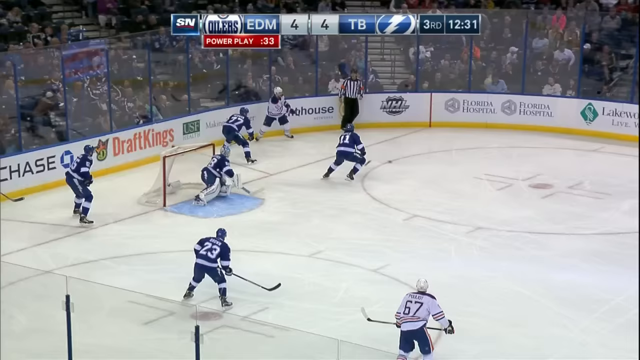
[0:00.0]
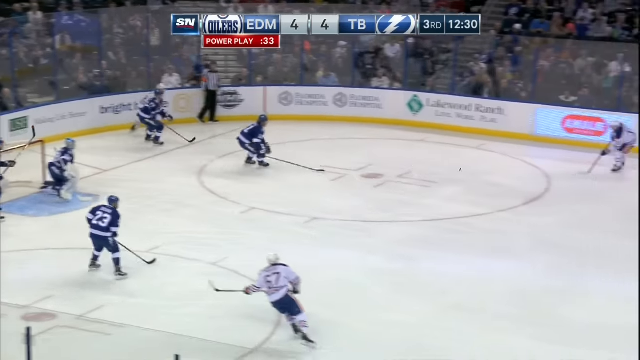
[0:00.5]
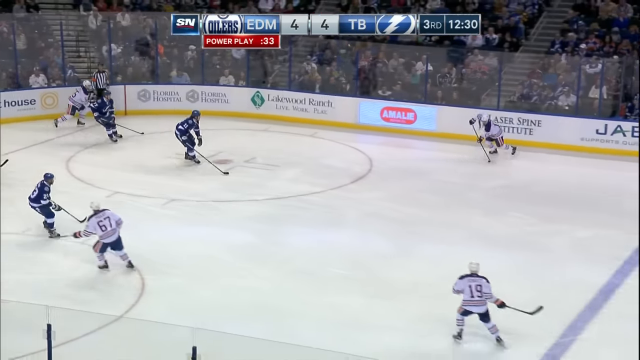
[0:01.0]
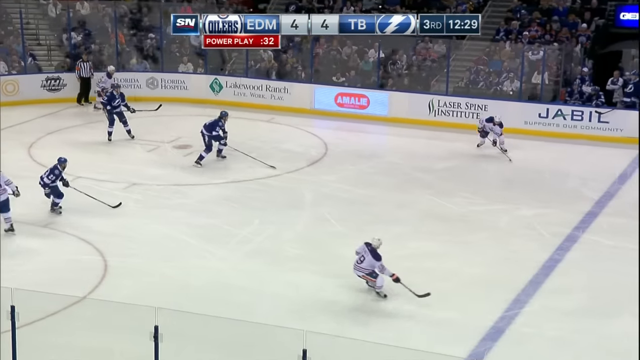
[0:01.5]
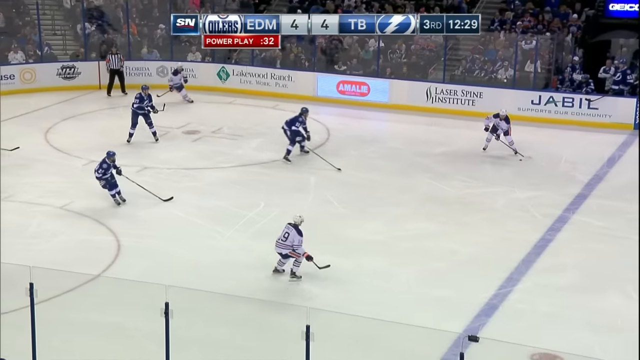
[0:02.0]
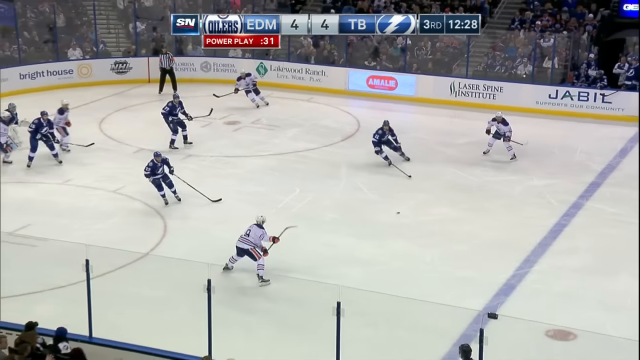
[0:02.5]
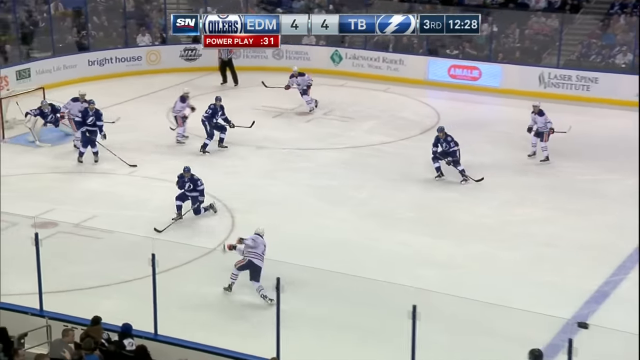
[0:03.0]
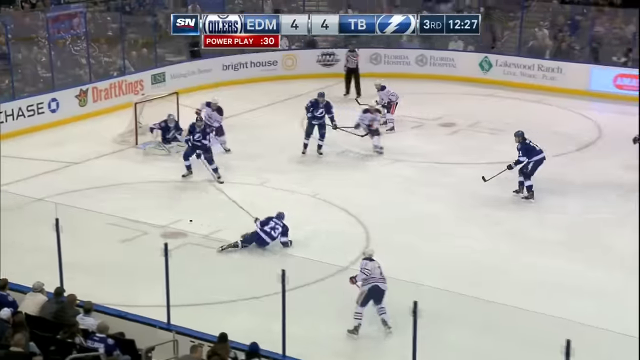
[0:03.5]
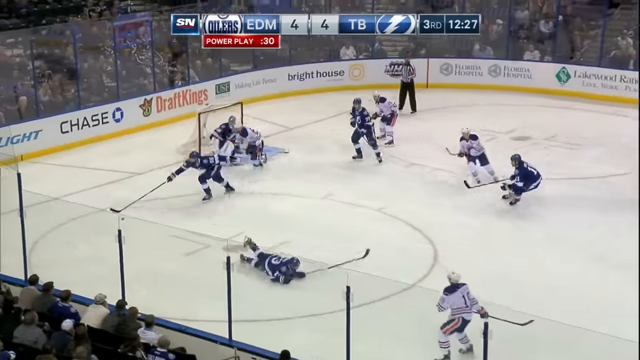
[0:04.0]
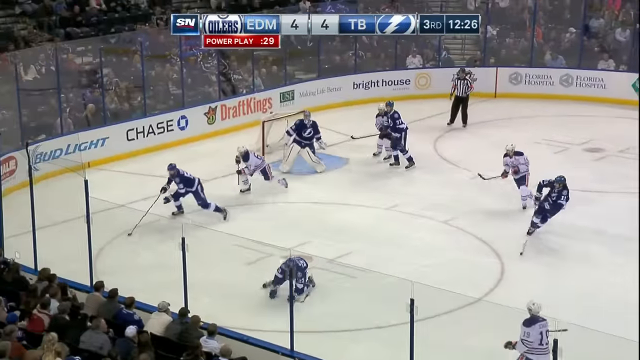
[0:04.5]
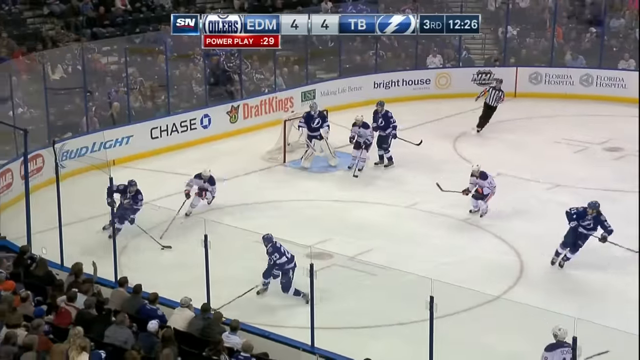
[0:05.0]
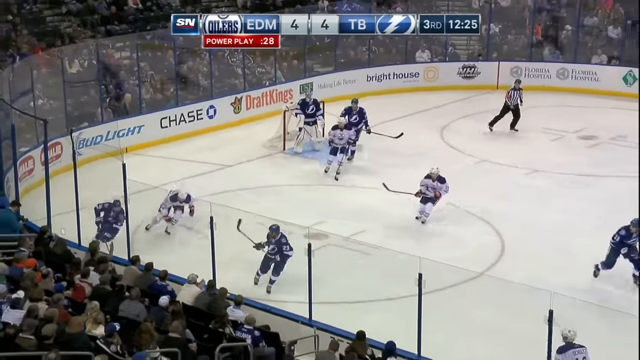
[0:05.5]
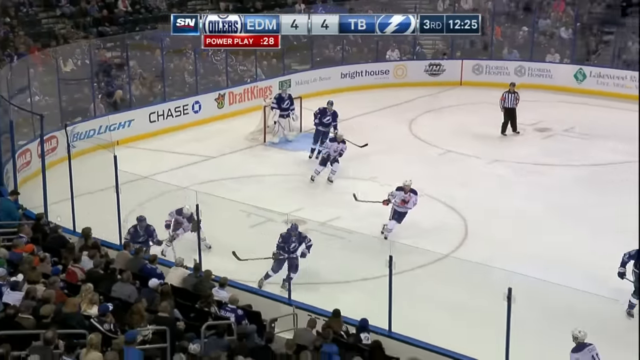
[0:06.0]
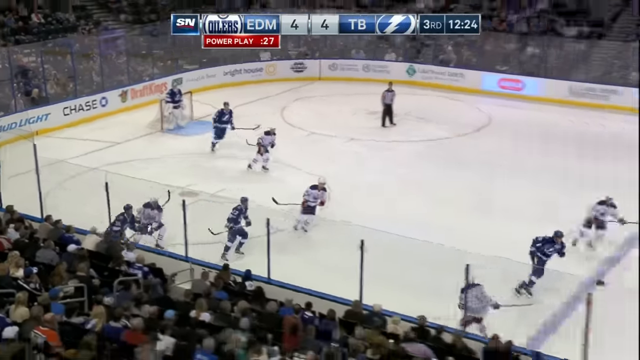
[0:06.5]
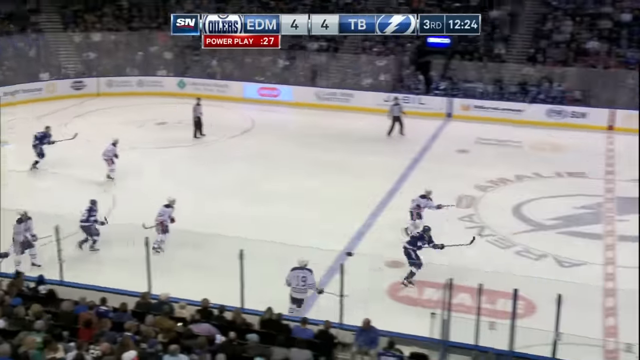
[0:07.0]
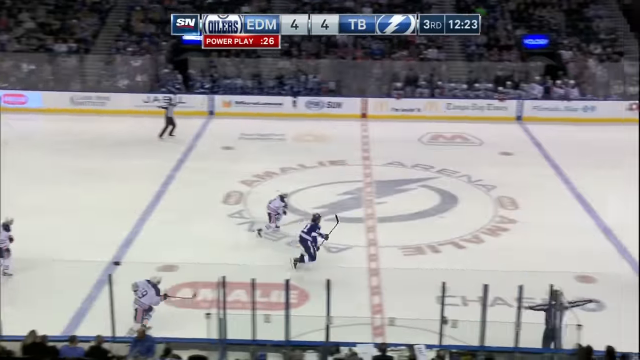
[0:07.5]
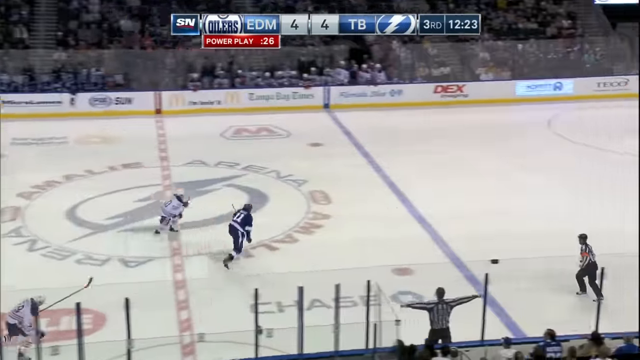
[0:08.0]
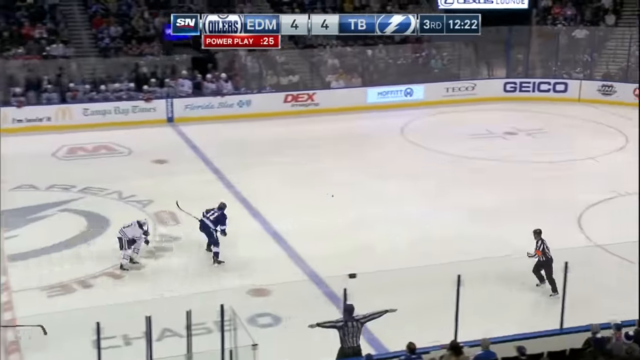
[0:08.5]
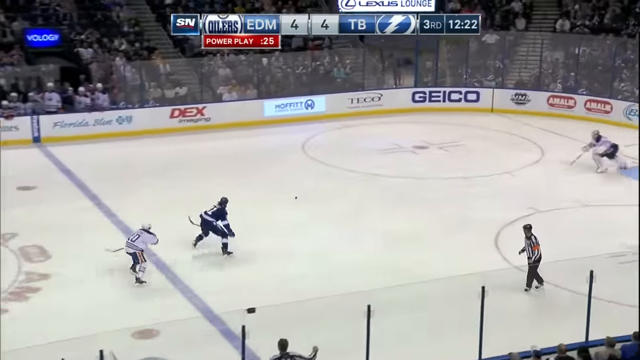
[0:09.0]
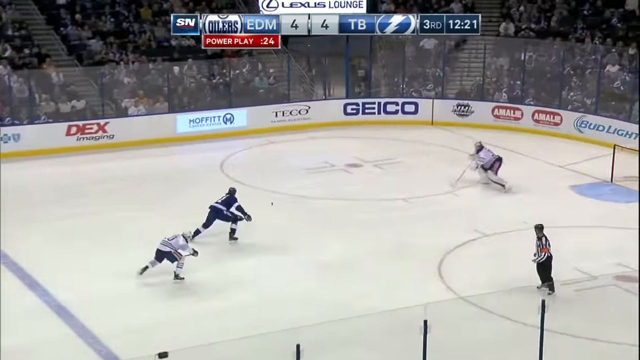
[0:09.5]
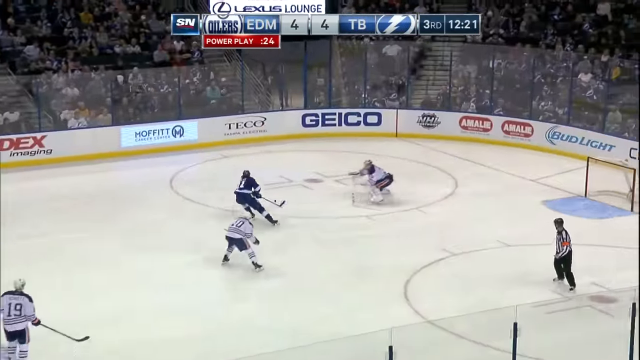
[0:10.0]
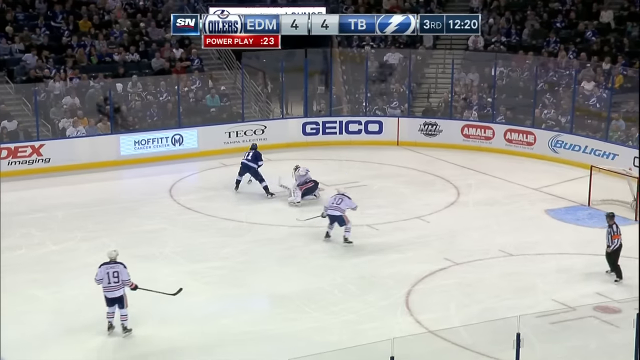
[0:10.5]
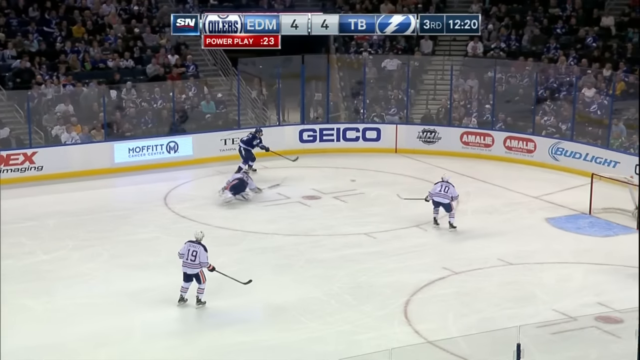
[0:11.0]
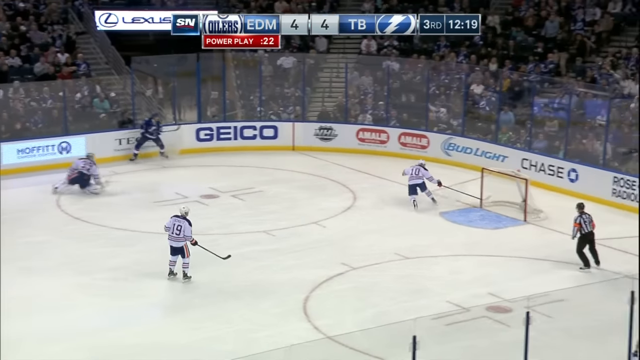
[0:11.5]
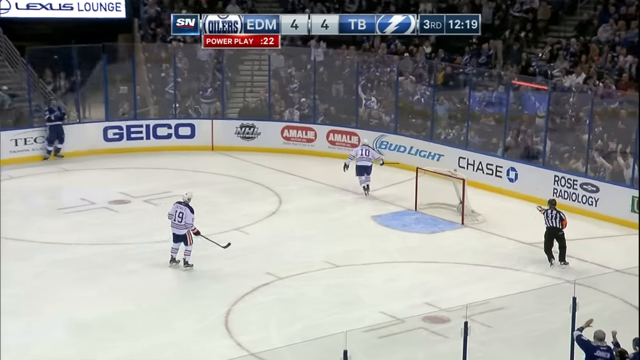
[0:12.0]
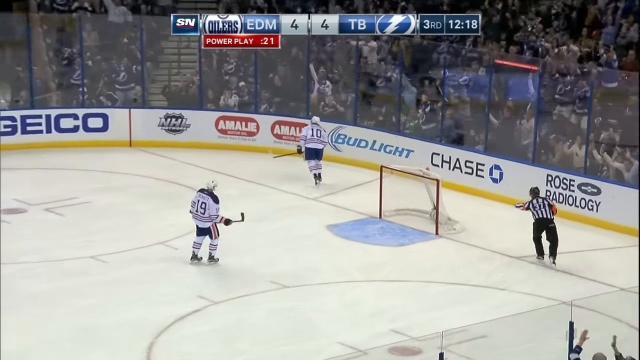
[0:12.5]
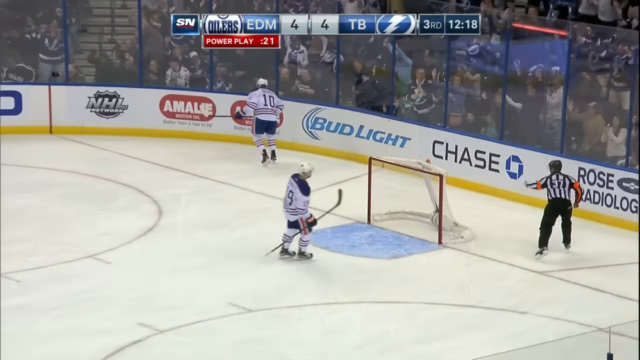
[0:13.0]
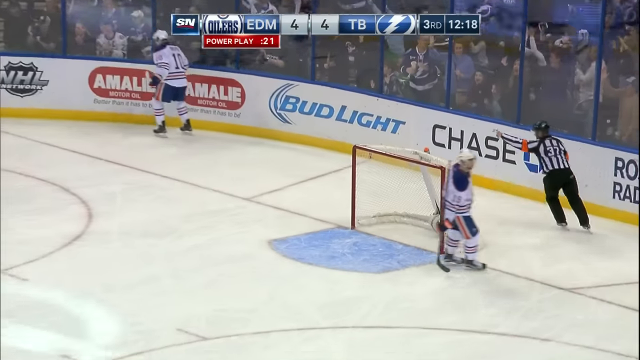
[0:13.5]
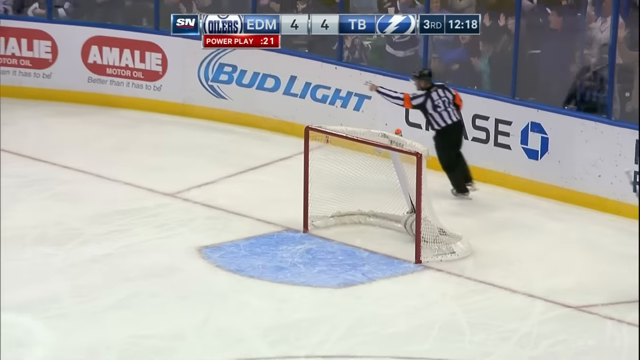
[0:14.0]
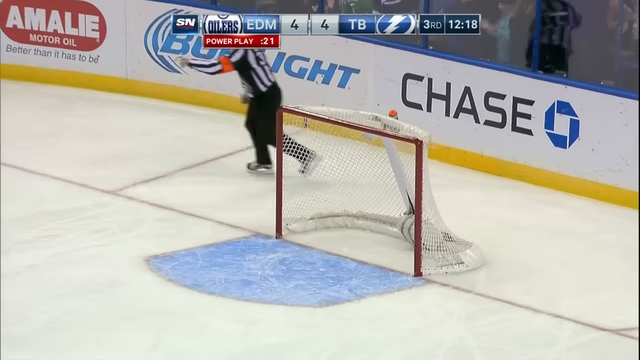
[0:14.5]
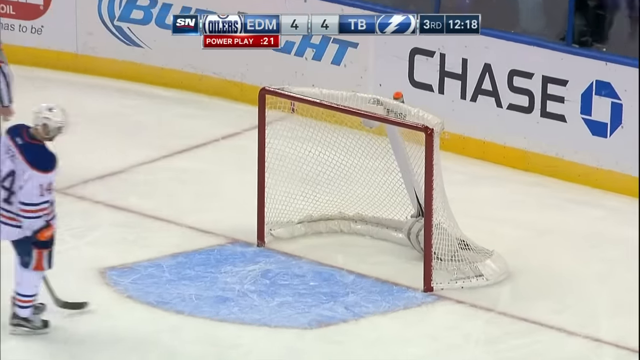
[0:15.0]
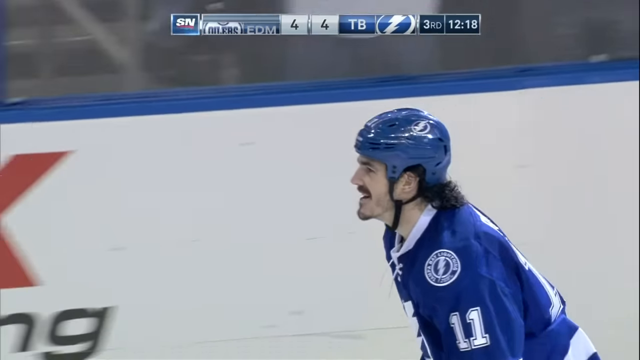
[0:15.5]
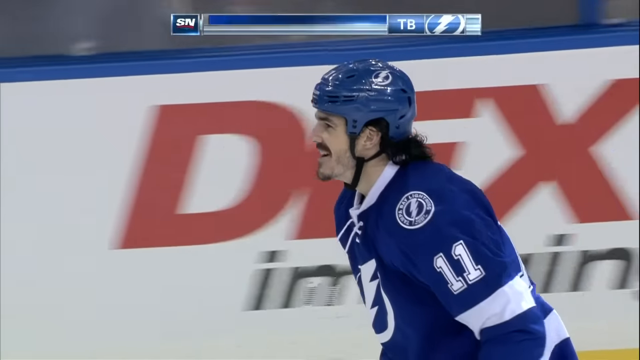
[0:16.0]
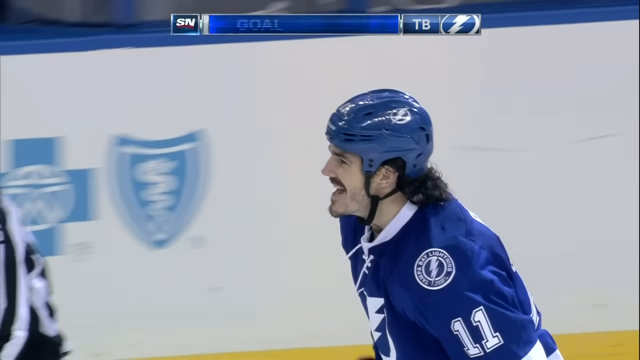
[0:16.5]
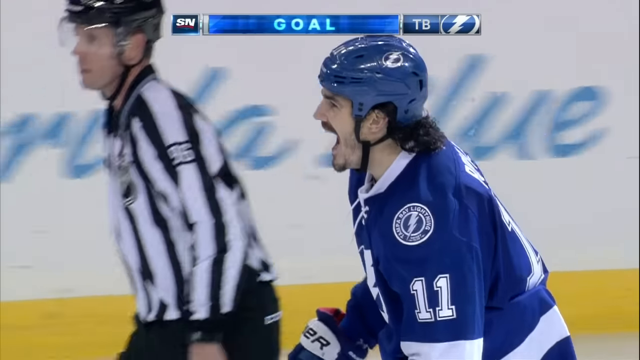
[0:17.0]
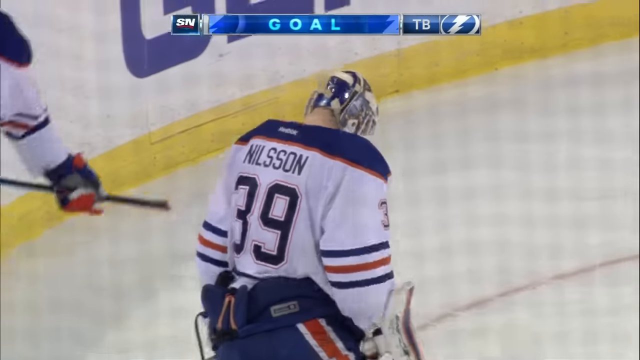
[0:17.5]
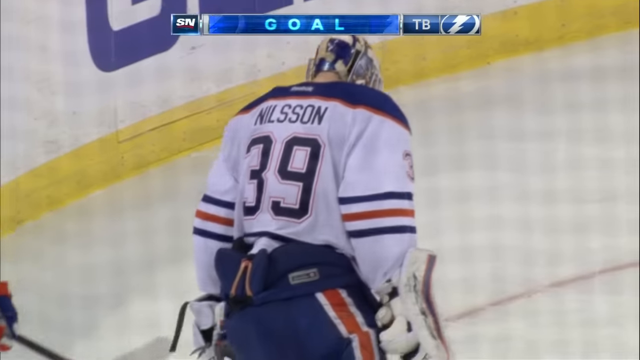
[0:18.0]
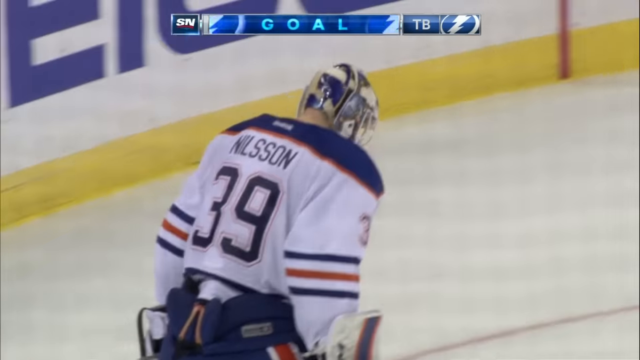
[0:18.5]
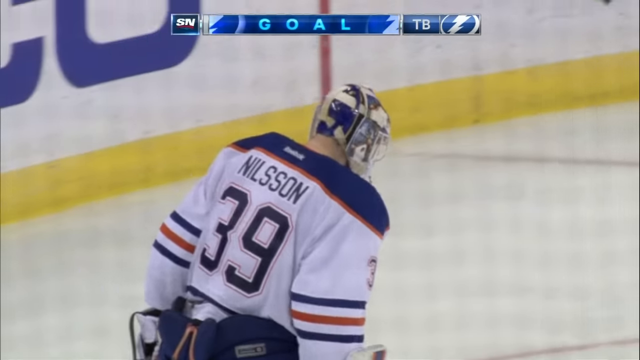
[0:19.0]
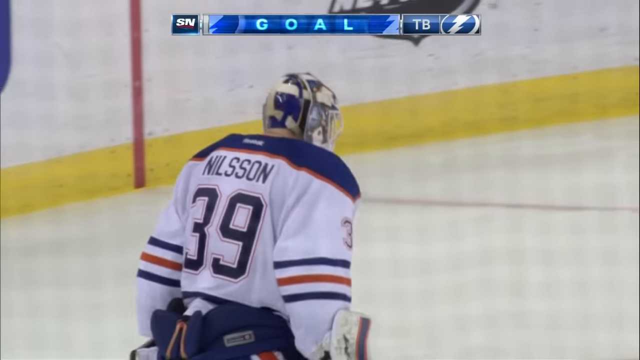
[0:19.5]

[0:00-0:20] A hockey game is in mid-play. On-screen text reads "Oilers", apparently the Edmond Oilers, and "TB" with a lightning bolt for the other team. The screen also shows "third", seemingly the third period, with 12:31 left, and below that on the left it reads "power play", with "33 power plays" in a red banner. The puck is passed around, and a shot is taken but is blocked a bit by one of the defensive players, who scoop and flip it out to the other side. One of the players gets the puck and flips it in for a goal. The goalie tries to stop it but cannot, and the goal is pretty much wide open. Another player on defense almost deflects the puck with his stick but does not get there in time.